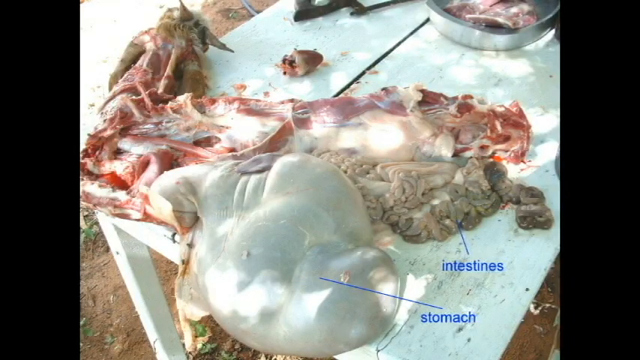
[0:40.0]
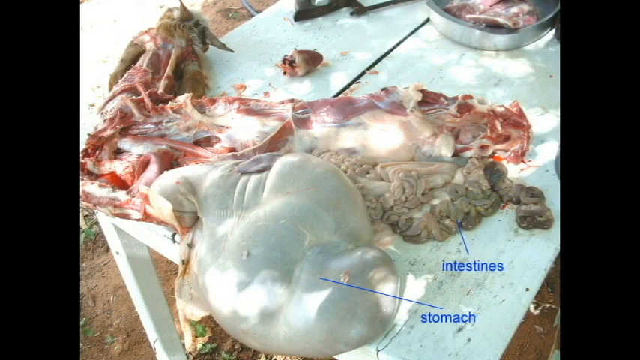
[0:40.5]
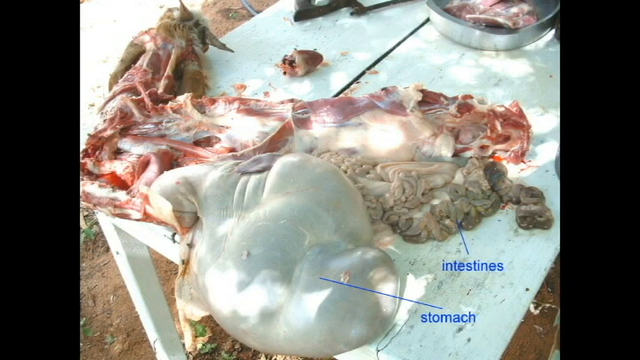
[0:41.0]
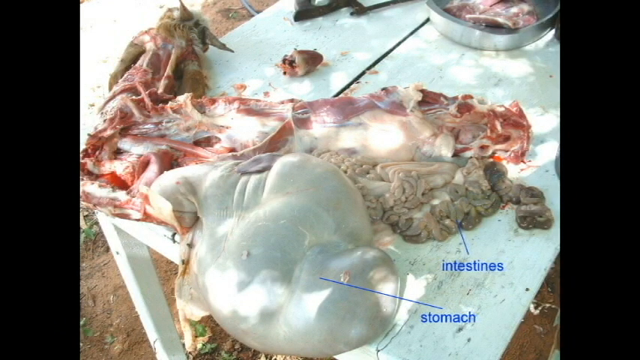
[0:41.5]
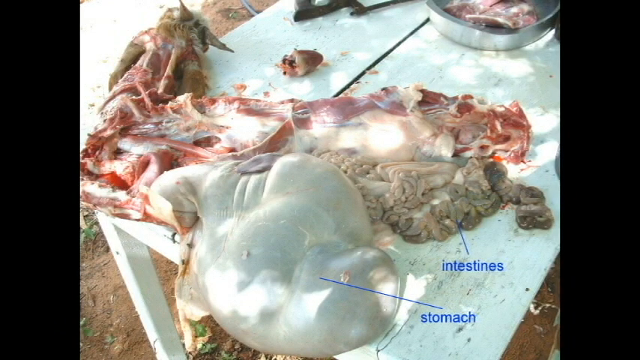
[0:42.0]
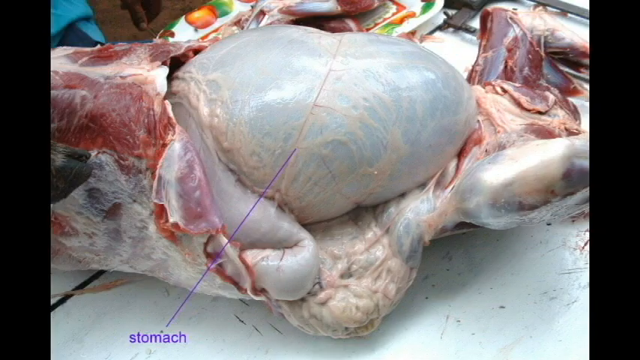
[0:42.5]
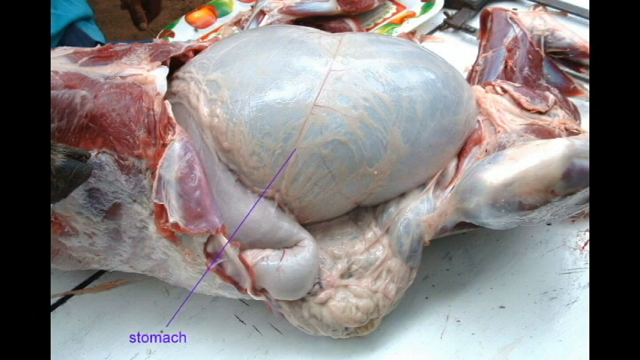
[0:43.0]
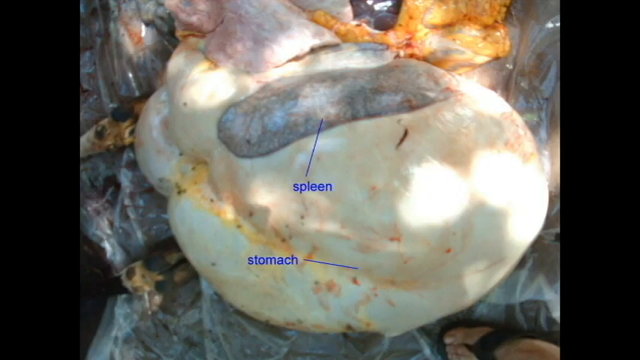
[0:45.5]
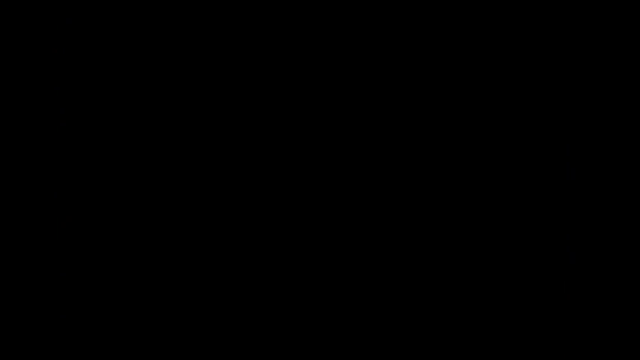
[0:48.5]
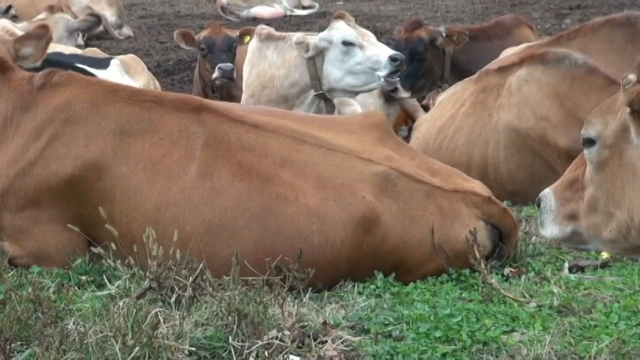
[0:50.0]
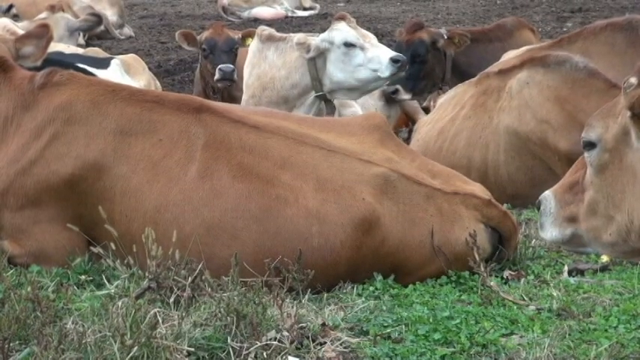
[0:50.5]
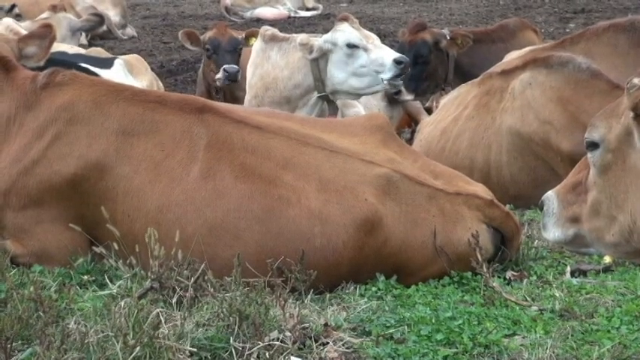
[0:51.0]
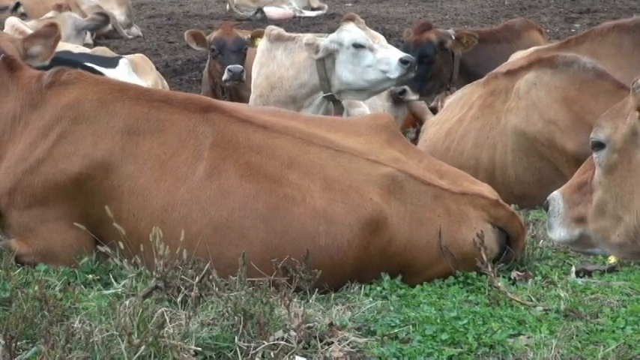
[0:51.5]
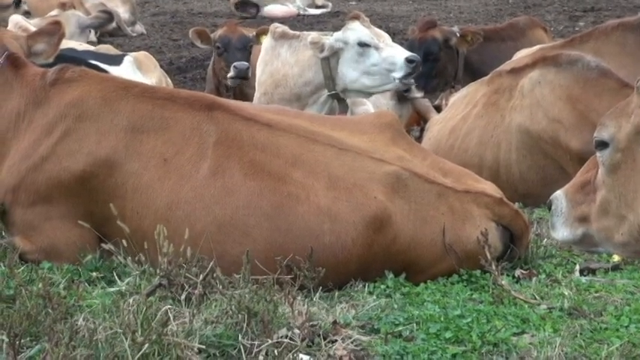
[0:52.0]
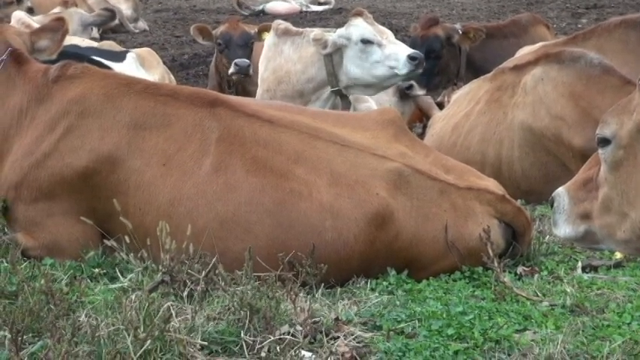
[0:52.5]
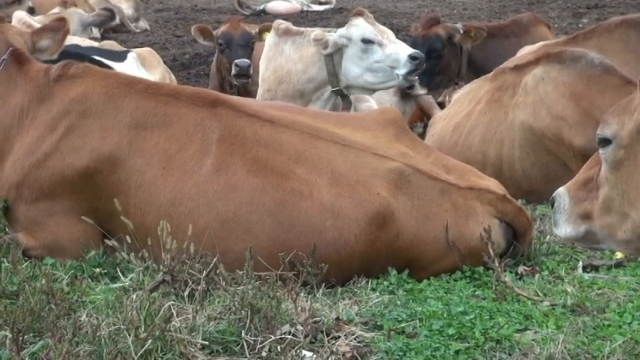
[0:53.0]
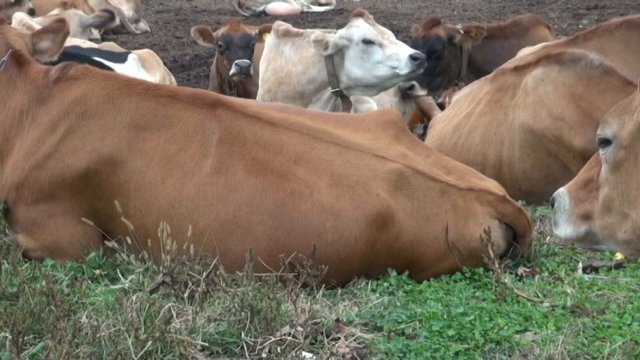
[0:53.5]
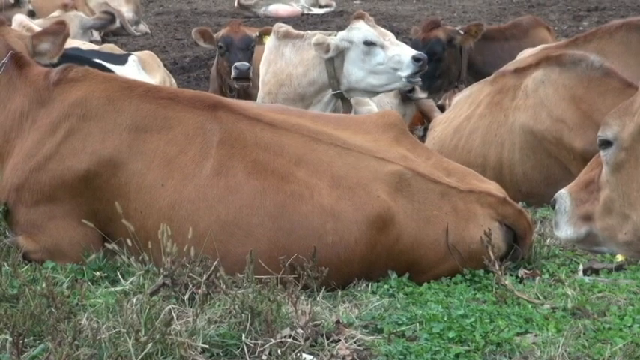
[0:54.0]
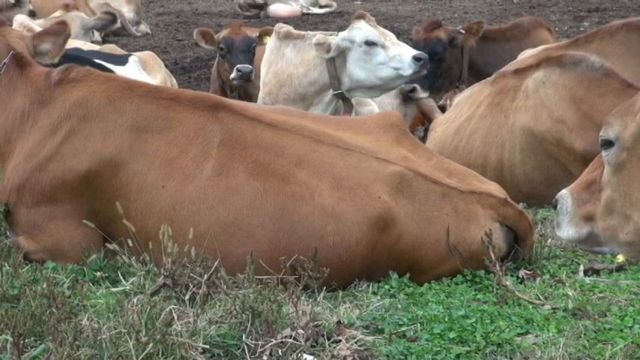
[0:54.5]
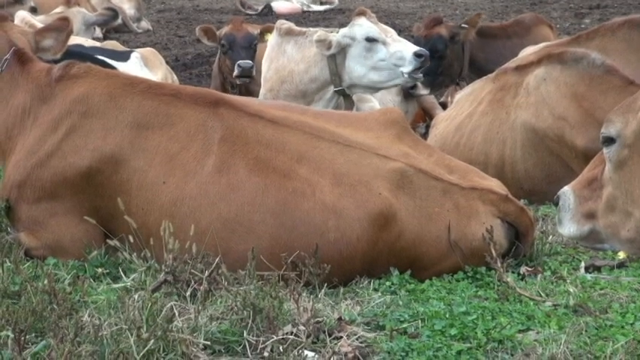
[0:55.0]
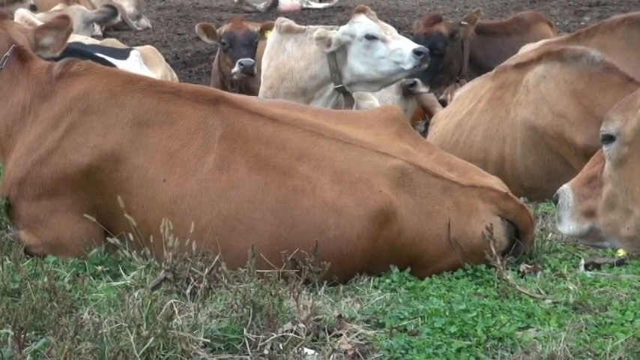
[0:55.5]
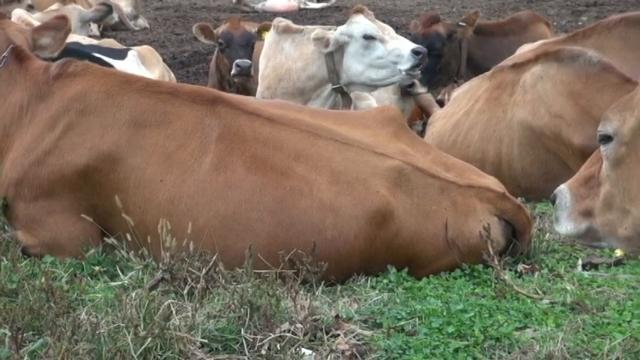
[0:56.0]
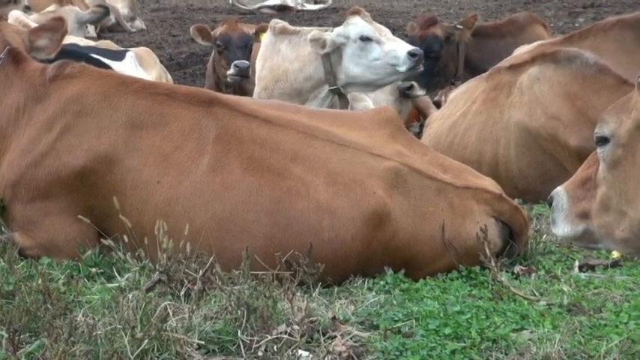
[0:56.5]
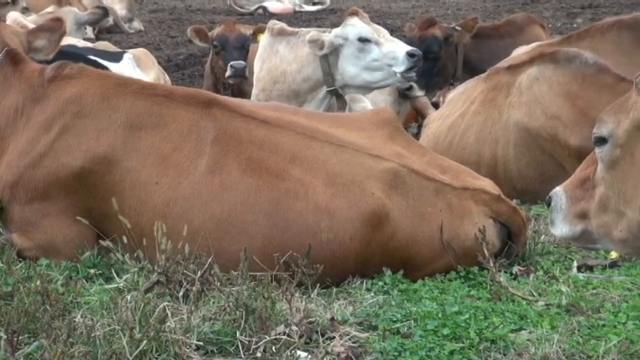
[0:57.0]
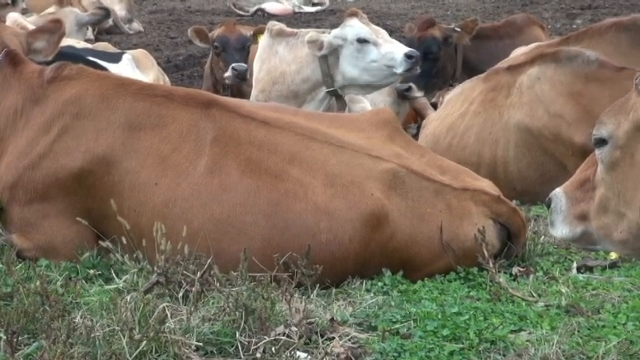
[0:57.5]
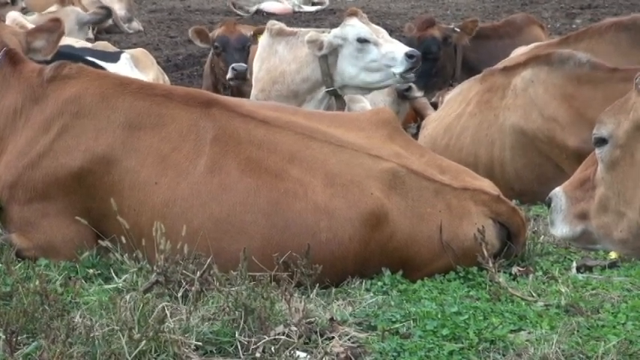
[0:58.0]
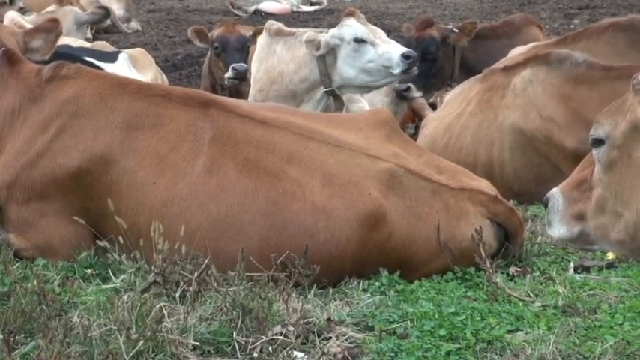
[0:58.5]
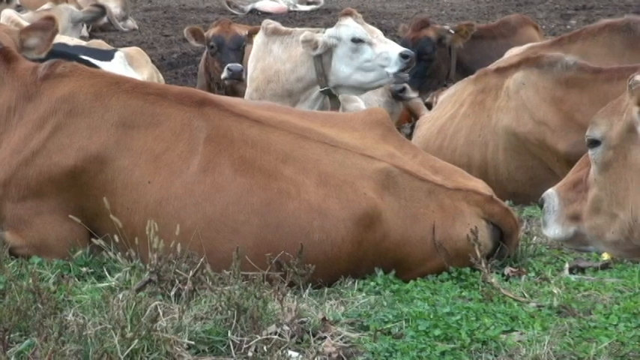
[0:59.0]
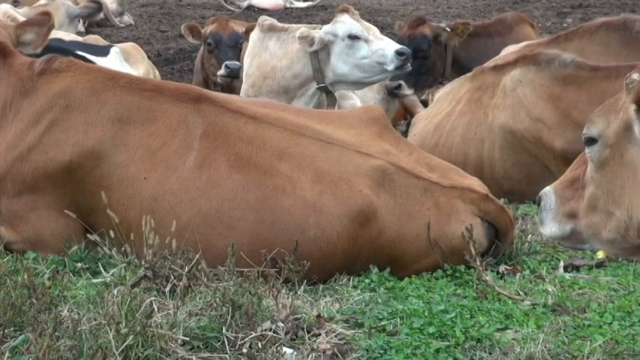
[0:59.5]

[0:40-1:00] The footage shows what looks like an animal opened up, with its insides on a table. There are some little blue markers. One points upward to a gray area and says "intestines"; another points to a white mass in the foreground of the table, which looks very smooth, labeled "stomach." This is likely the insides of an animal. The video then shows a close-up of a different part, perhaps of a different animal: there appears to be a large mass in the center with a purple line coming from it, labeled "stomach." More footage of what looks like the inside of an animal follows, with the spleen and the stomach pointed out; the spleen looks like the little gray area on top of the white stomach. The video then shows footage of what look like cows lying on the ground in a field.